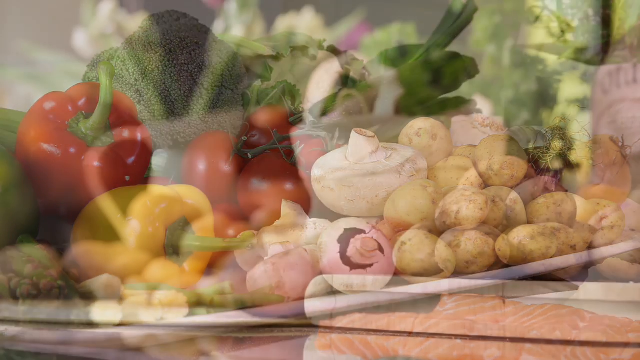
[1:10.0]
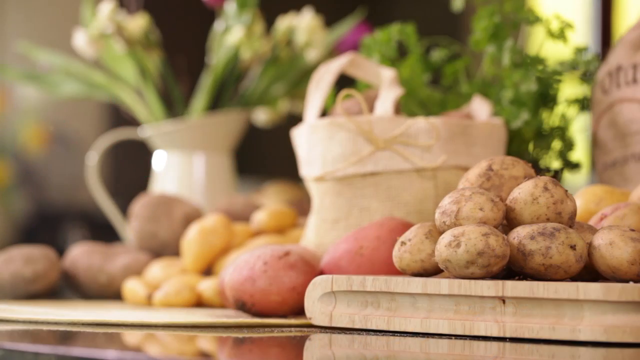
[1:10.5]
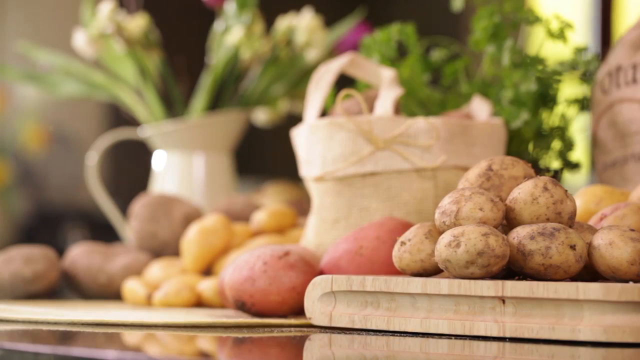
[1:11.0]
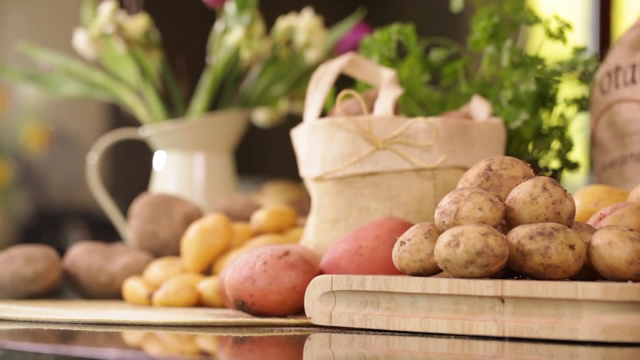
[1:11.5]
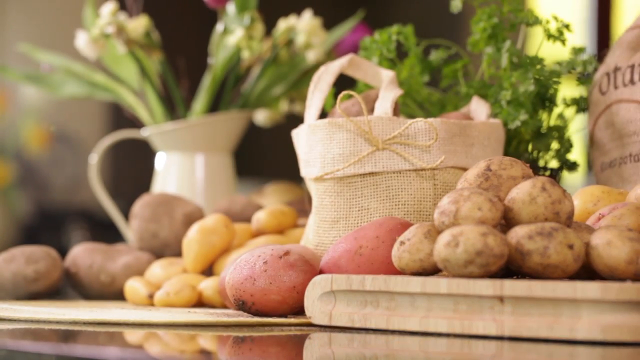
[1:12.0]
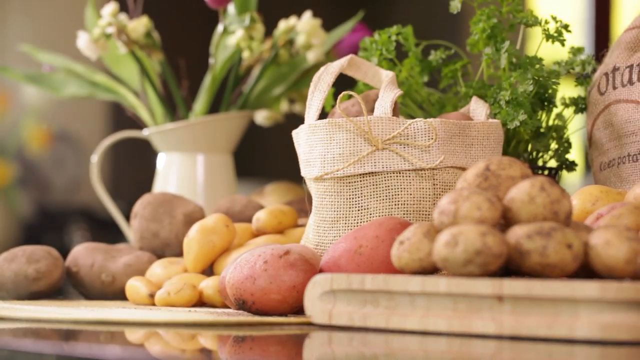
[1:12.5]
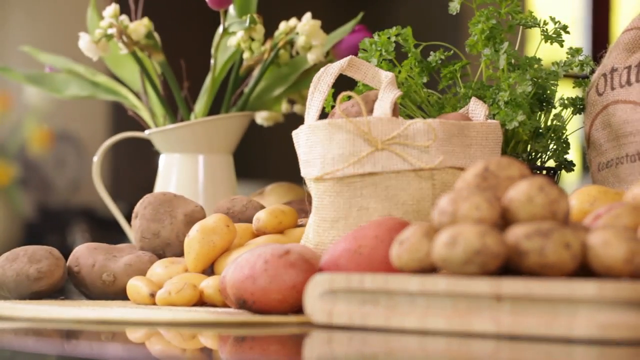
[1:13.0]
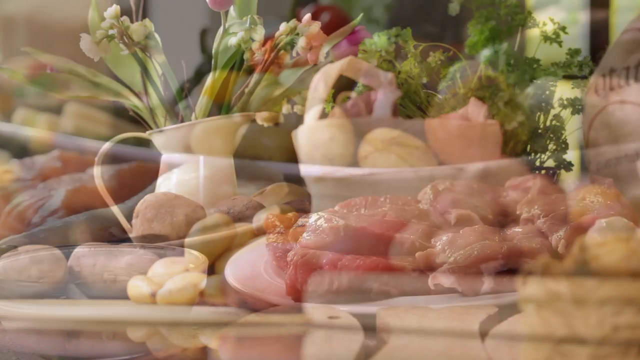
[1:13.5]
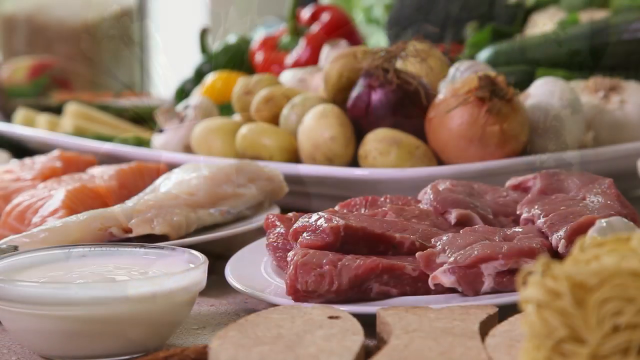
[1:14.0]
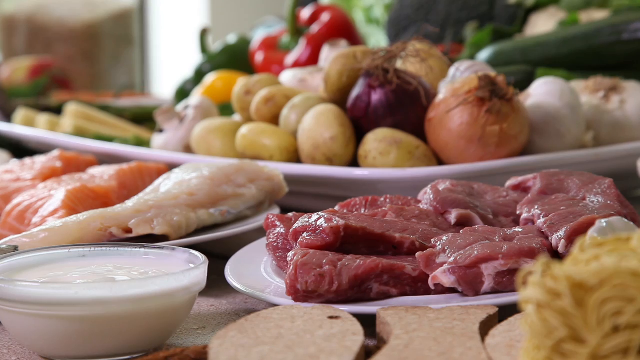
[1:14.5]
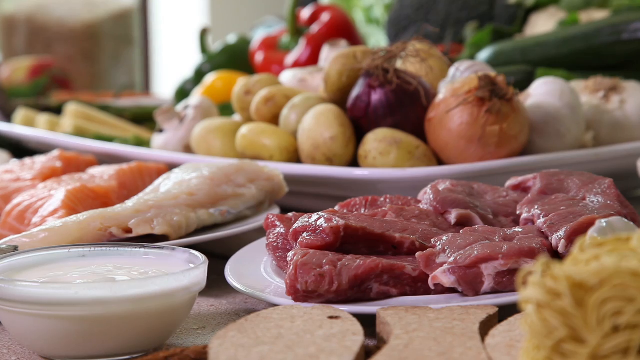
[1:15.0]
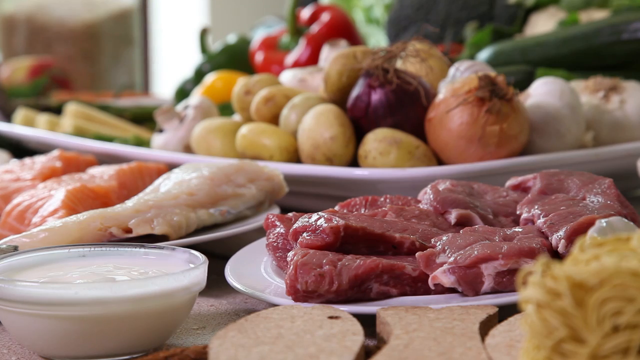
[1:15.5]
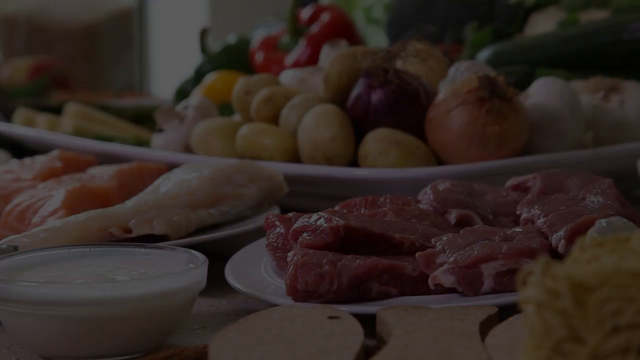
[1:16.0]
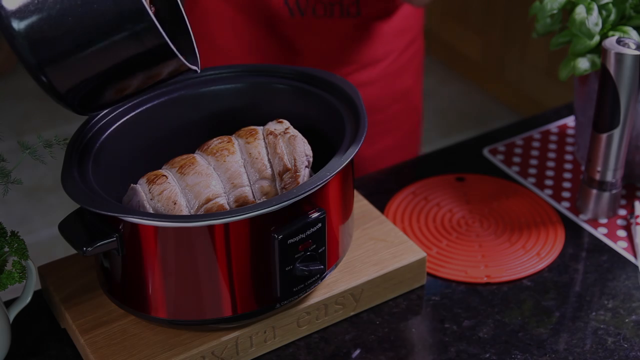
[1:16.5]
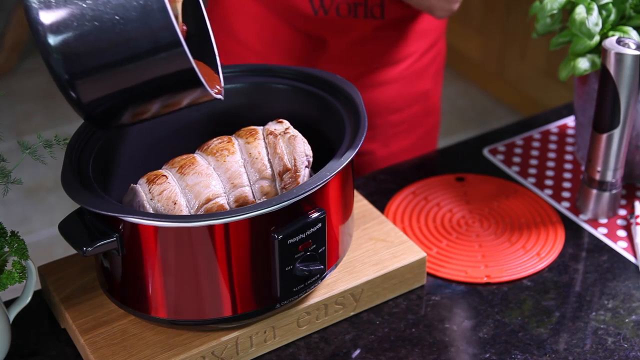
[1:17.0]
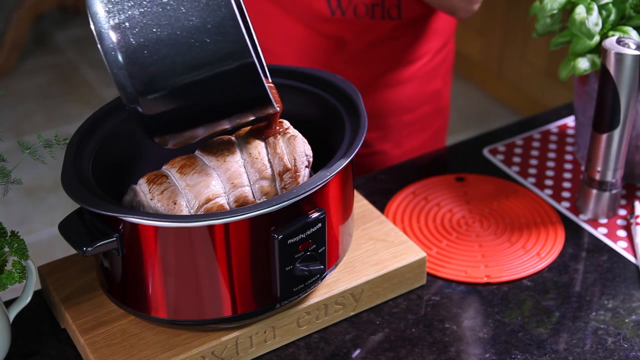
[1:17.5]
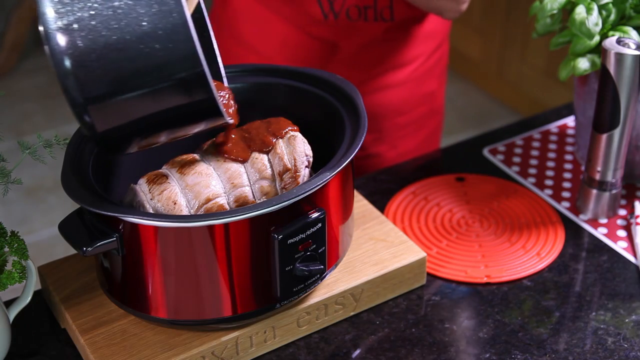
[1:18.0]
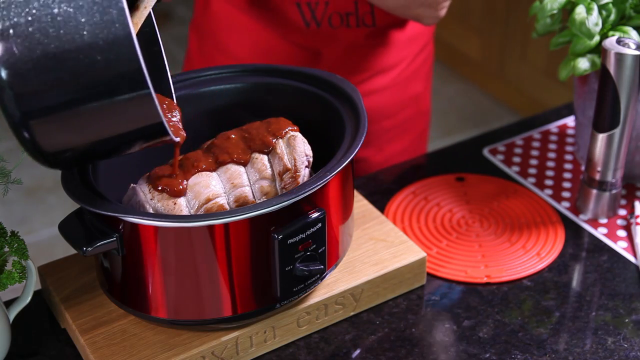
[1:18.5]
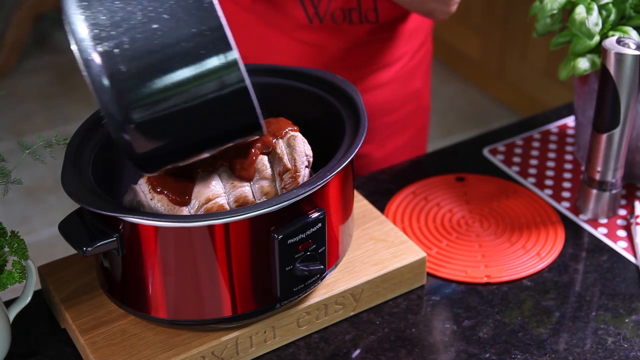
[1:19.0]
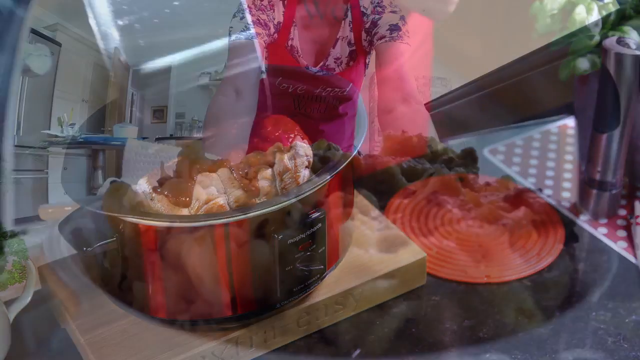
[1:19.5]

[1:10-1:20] The video moves across various cooking scenes in different areas. It starts with a tabletop that has a wooden cutting board off to the right with some whole potatoes on top of it. Behind it are what look like canvas bags with vegetable greenery flowing out of the top. There are flowers in the background and various other types of potatoes, red, brown and yellow, laid out on the table in a decorative pattern. The video then cuts to another tabletop in a different area with white ceramic plates; the one in the back has potatoes and onions displayed on it. Various sauces are at the front, and a plate of uncooked fish and a plate of uncooked meat are laid out on display showing the cuts. It then cuts to a kitchen area where a person pours some sauce over a dish that is being put into a crockpot, and then this person, wearing a red apron, pulls a dish out of an oven.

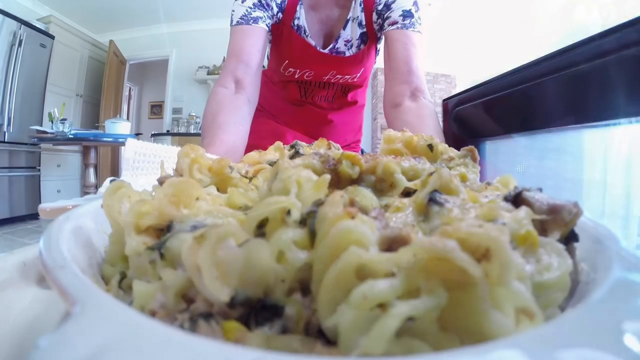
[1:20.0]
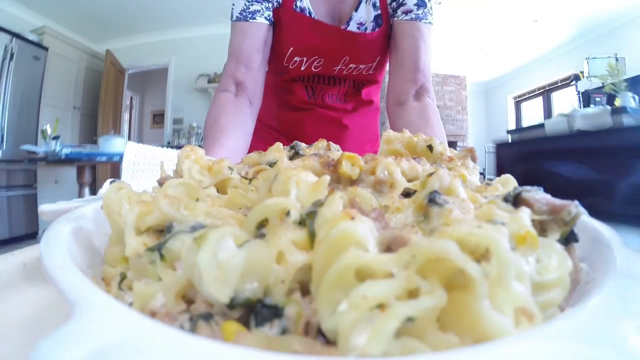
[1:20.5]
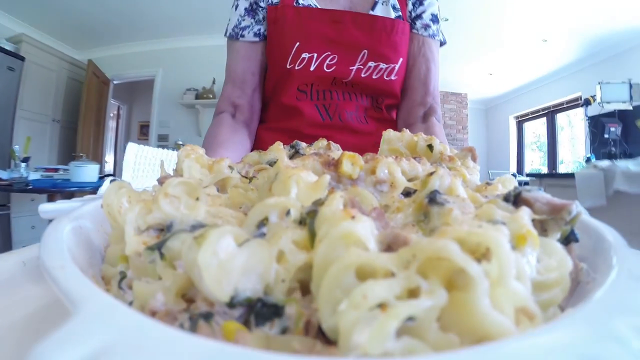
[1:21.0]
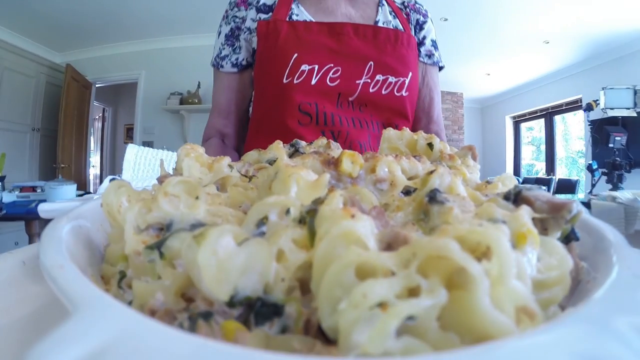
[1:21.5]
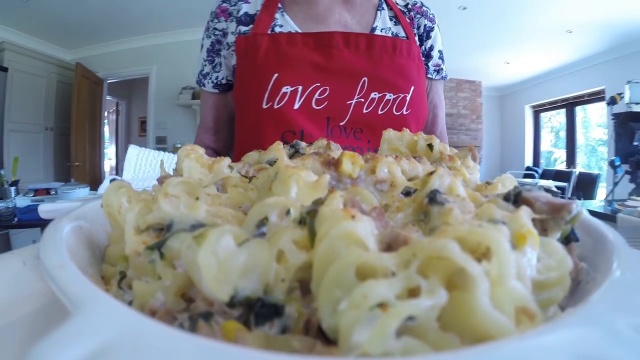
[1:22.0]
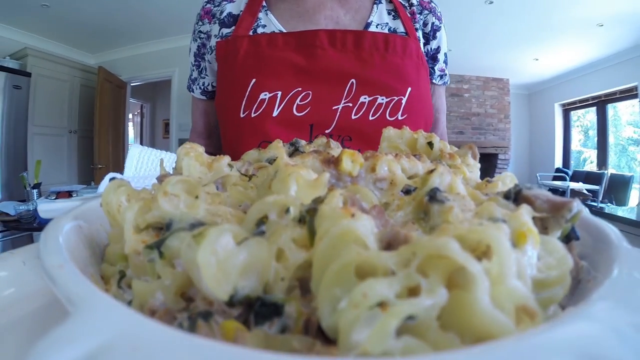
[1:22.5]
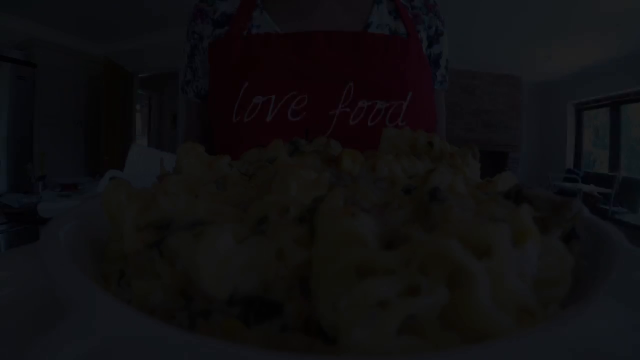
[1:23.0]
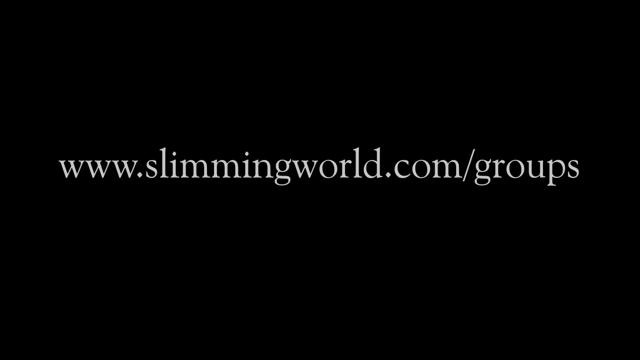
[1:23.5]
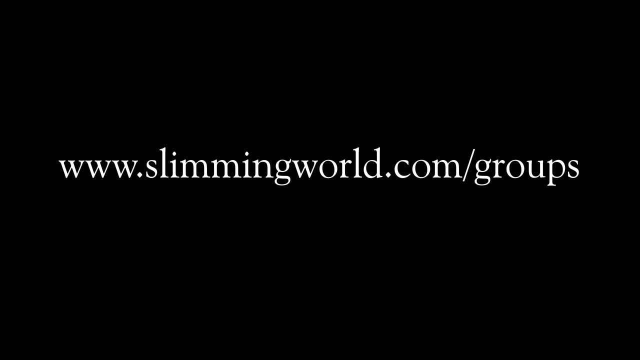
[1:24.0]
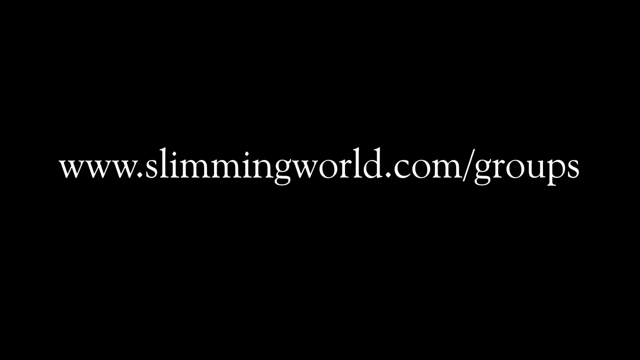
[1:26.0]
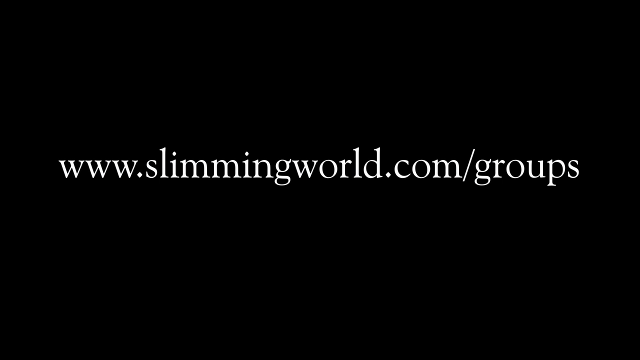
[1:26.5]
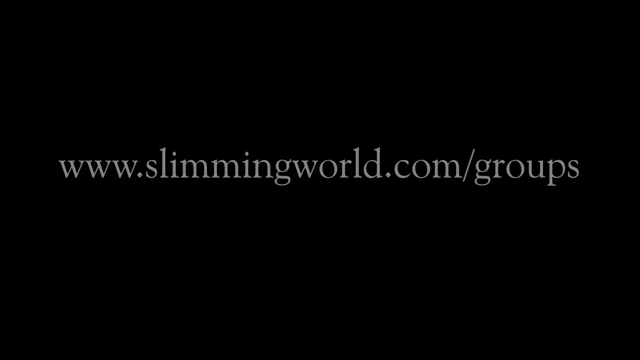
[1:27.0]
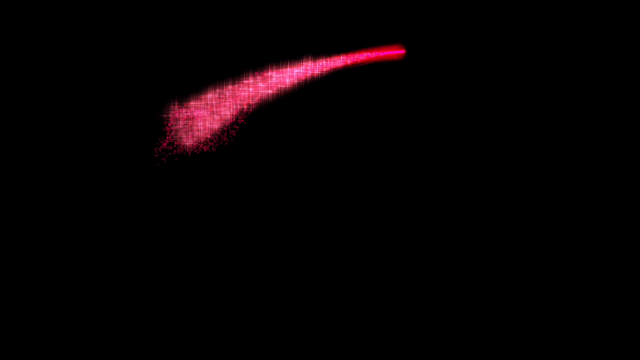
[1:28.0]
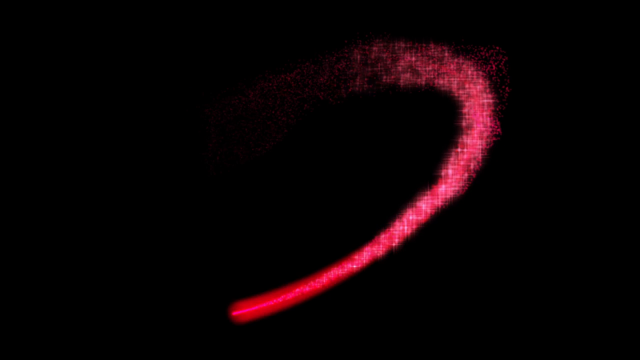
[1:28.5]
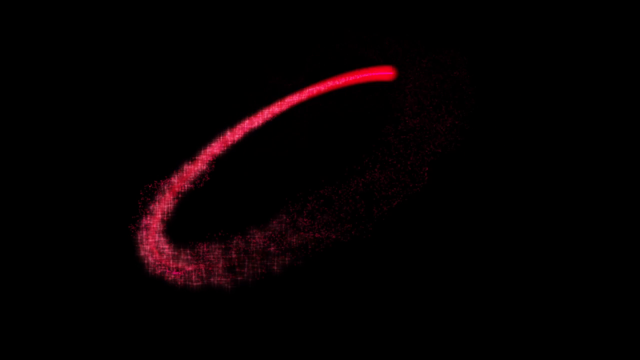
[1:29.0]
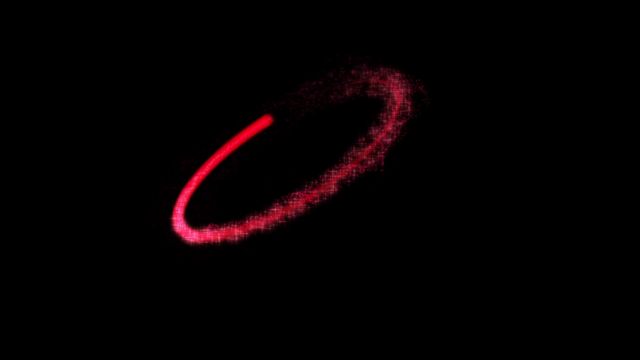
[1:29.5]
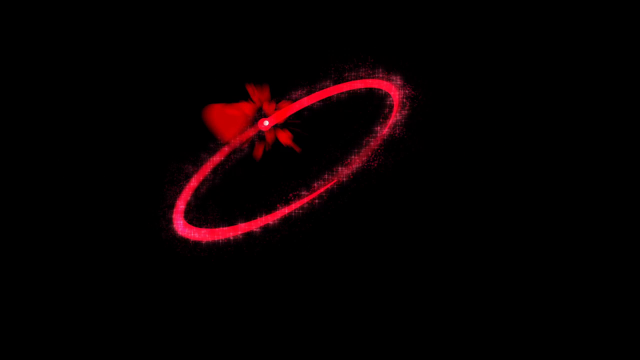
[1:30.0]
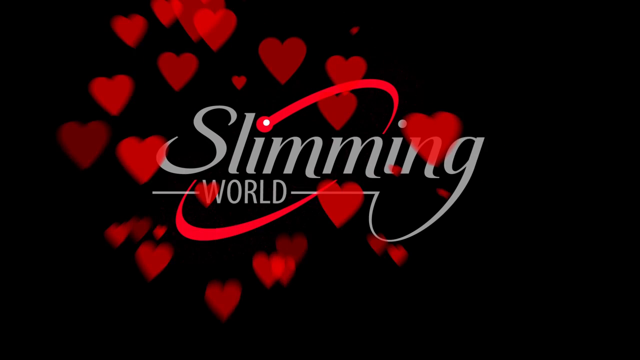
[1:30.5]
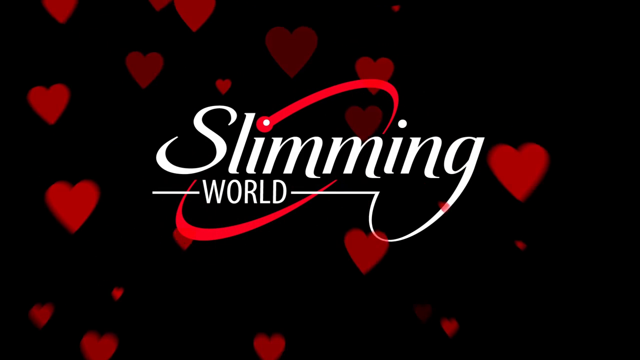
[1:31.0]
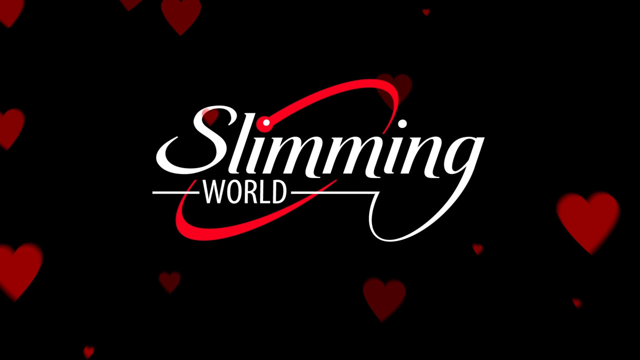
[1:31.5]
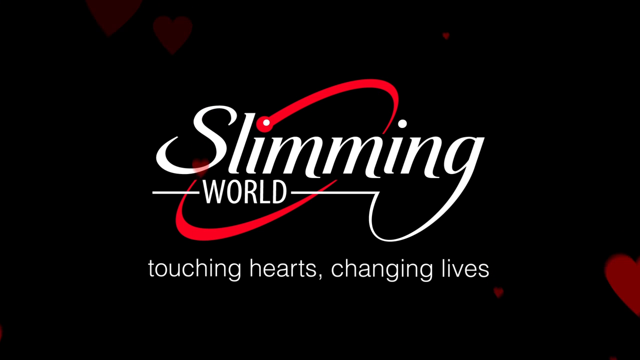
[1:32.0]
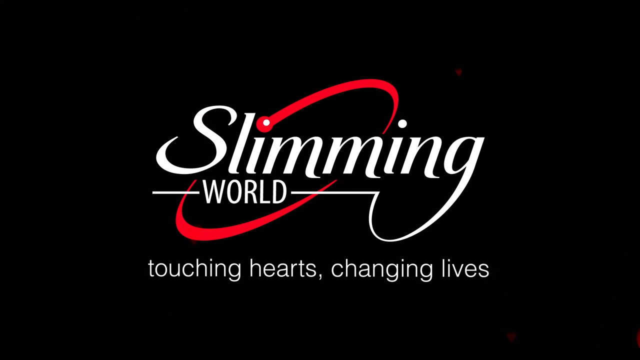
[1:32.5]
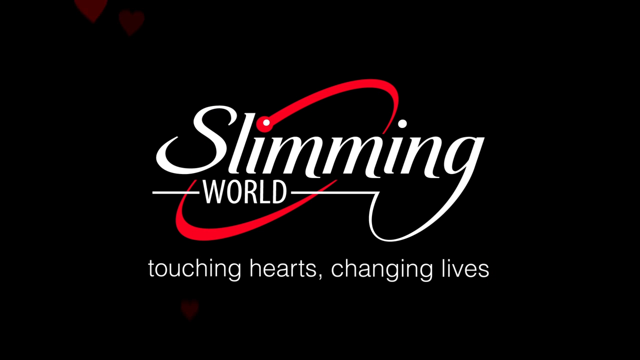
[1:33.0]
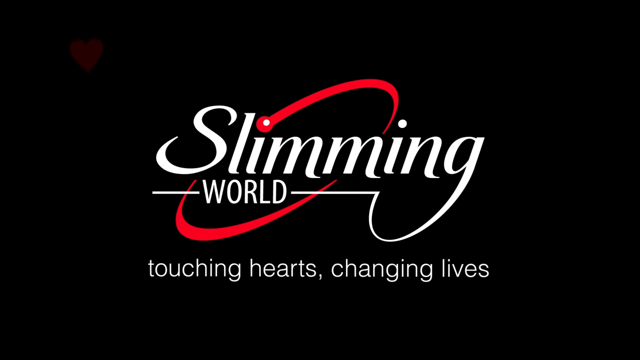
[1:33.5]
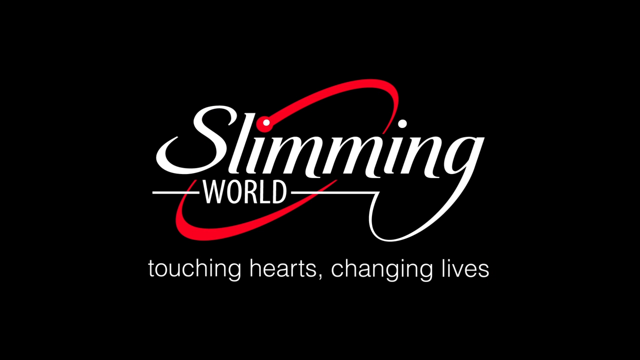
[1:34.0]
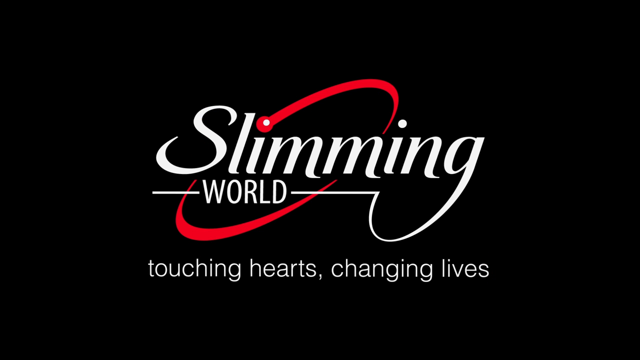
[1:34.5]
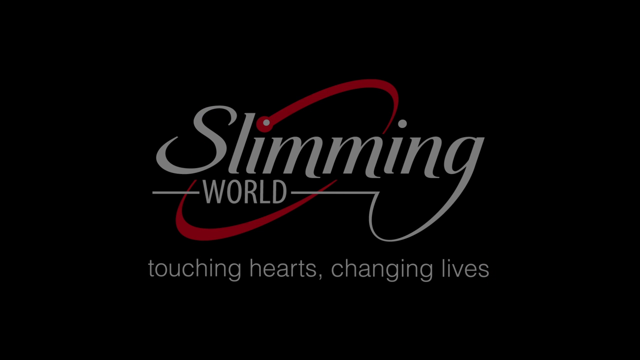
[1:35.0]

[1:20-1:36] This part is largely an outro. A completed dish of food is pulled out of an oven; it appears to be some type of casserole with a heavier noodle cooked inside a ceramic casserole-style dish. The viewpoint is from the perspective of the dish coming out of the oven, looking over the top of the item at the person pulling it out. A red apron is visible on a woman, with a kitchen behind her and white walls in the background. Cabinets are off to one side, and on the other side are doors leading out of the room. The video then cuts to a largely black screen showing the website "www.slimmingworld.com/groups". After that, a logo for the company Slimming World appears, along with the text "Touching Hearts and Changing Lives".